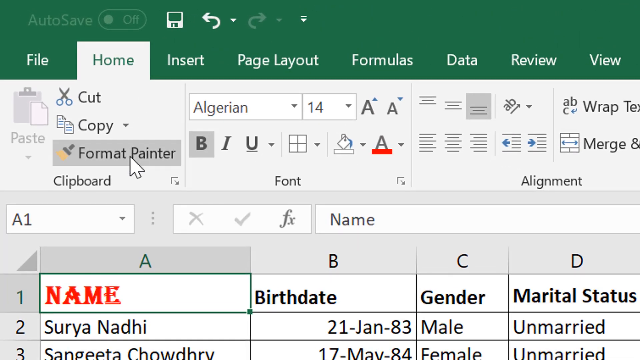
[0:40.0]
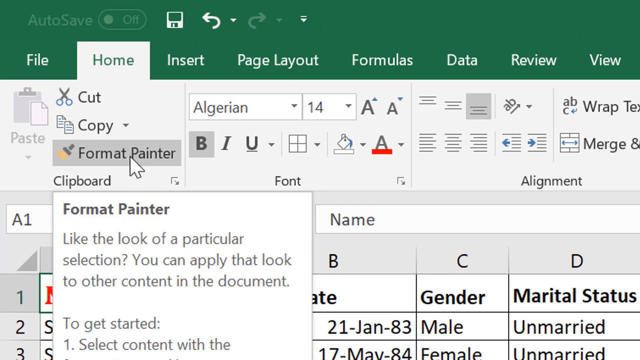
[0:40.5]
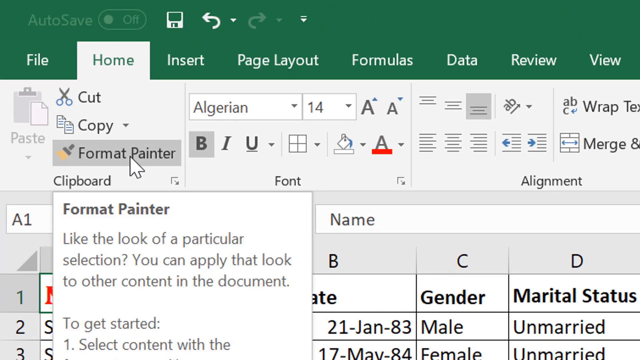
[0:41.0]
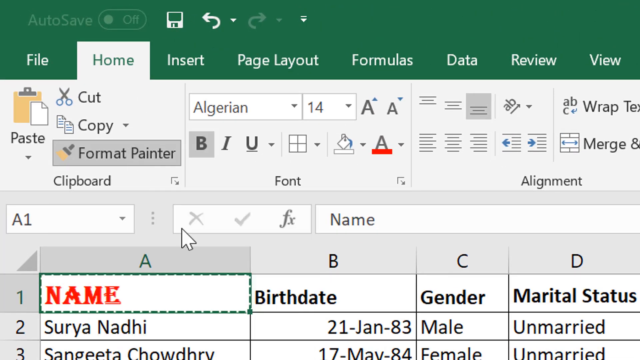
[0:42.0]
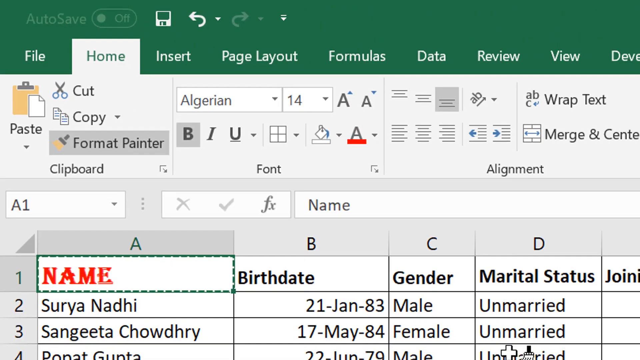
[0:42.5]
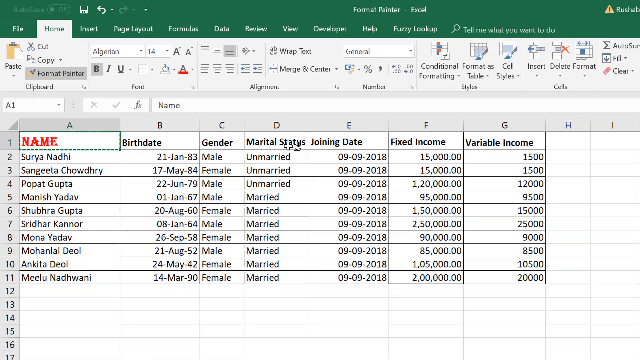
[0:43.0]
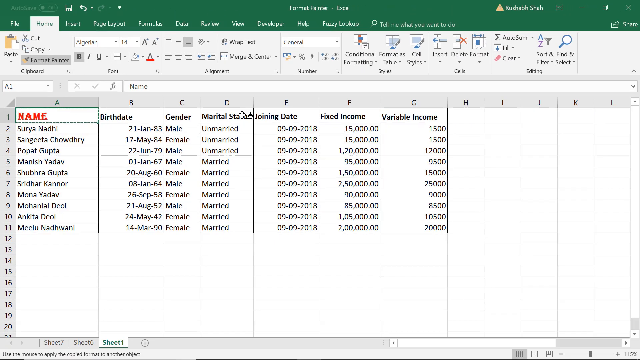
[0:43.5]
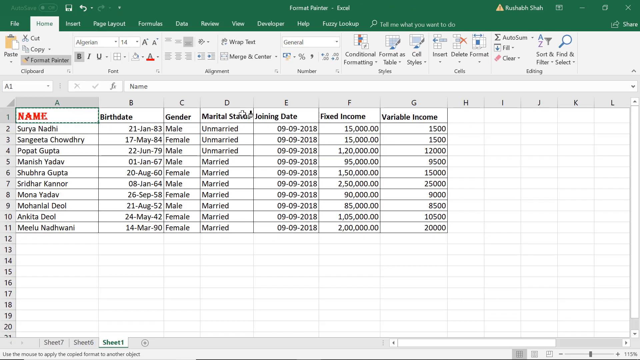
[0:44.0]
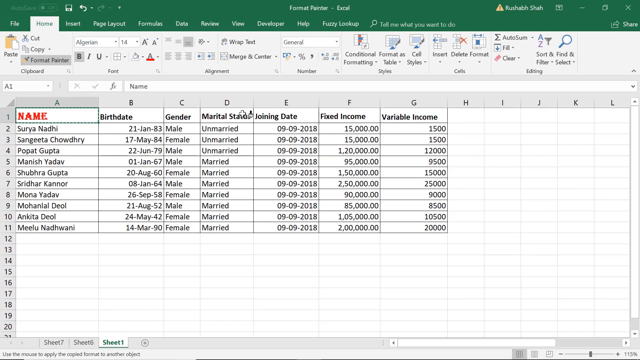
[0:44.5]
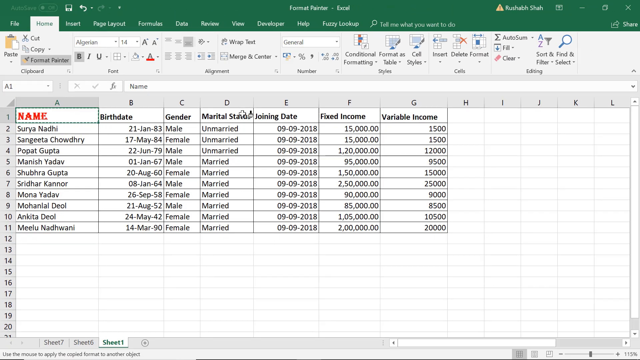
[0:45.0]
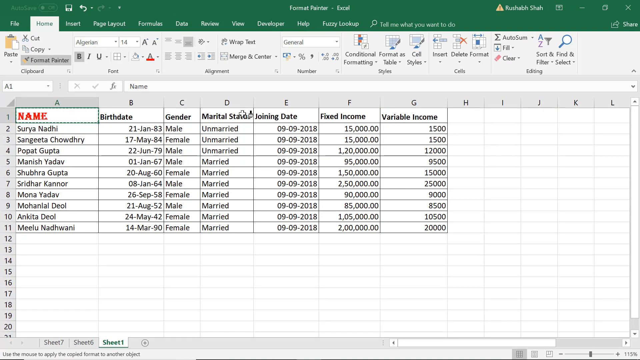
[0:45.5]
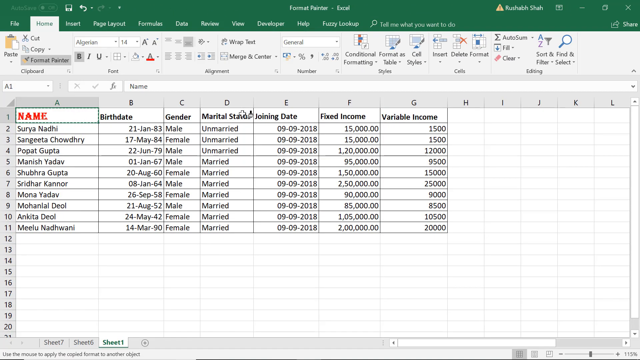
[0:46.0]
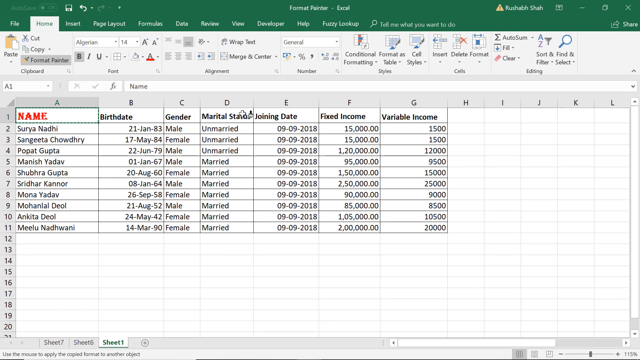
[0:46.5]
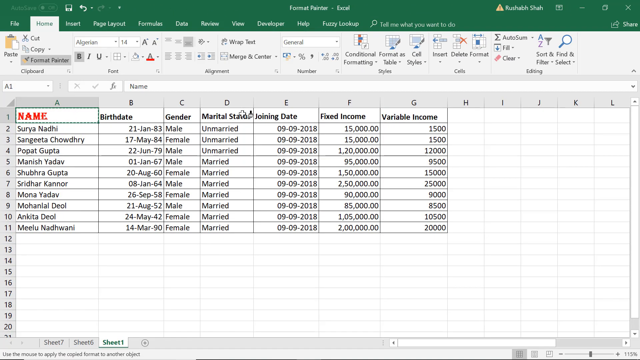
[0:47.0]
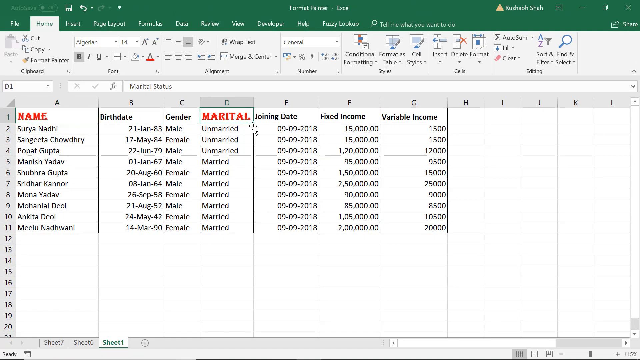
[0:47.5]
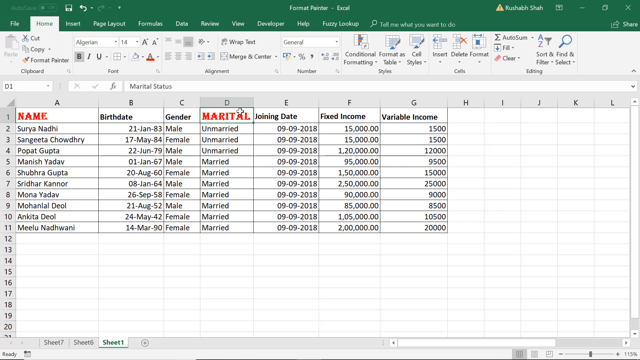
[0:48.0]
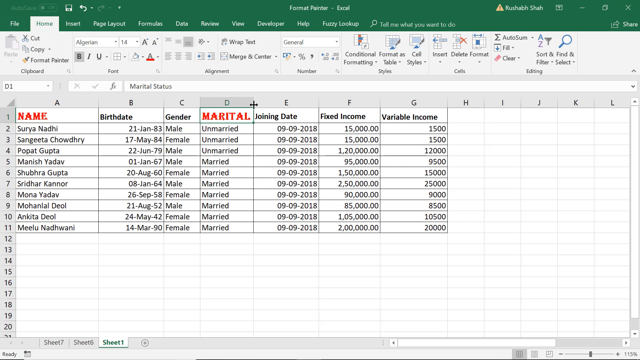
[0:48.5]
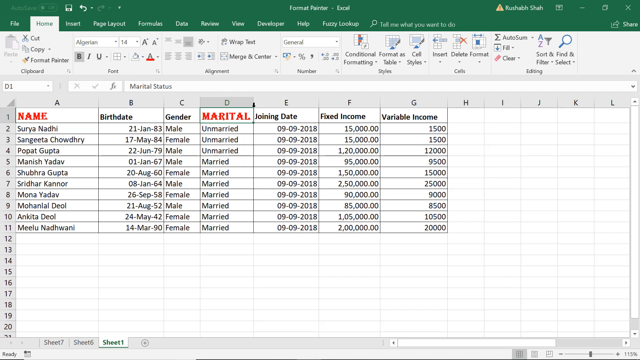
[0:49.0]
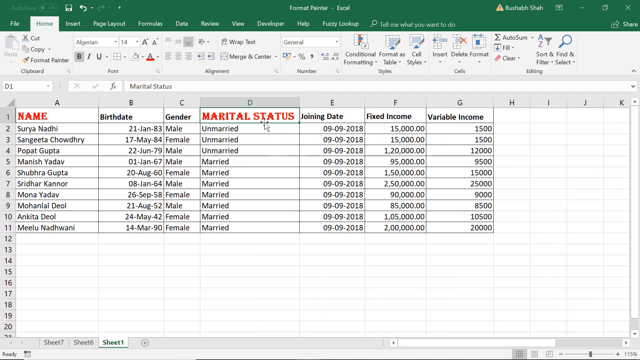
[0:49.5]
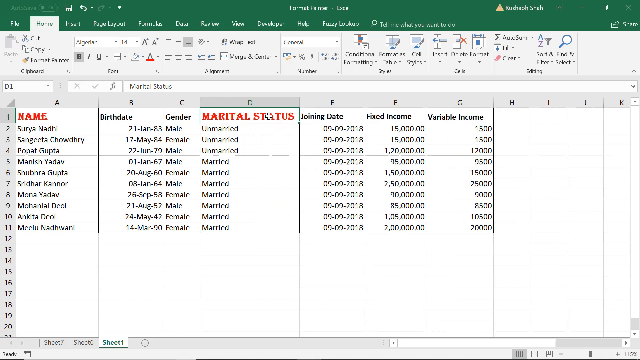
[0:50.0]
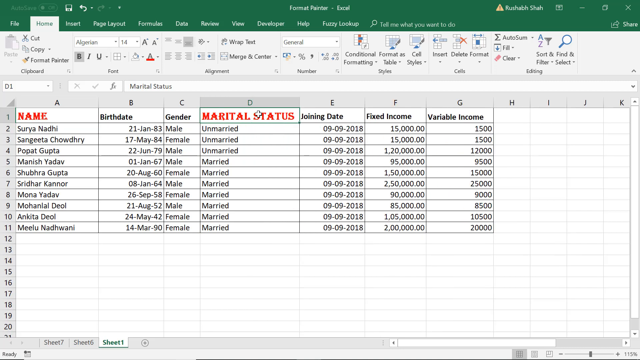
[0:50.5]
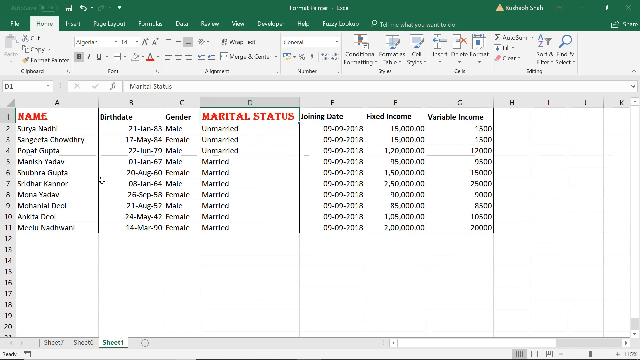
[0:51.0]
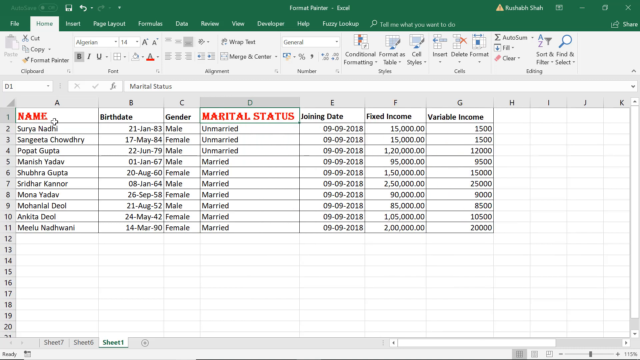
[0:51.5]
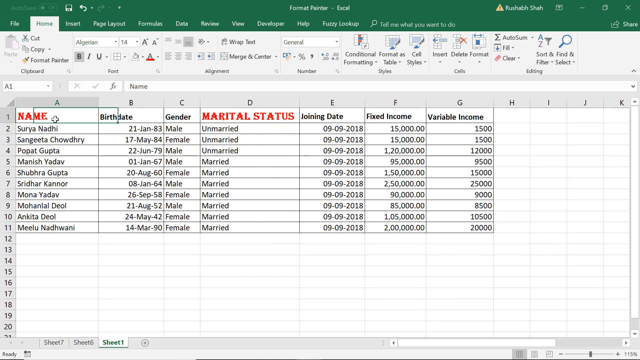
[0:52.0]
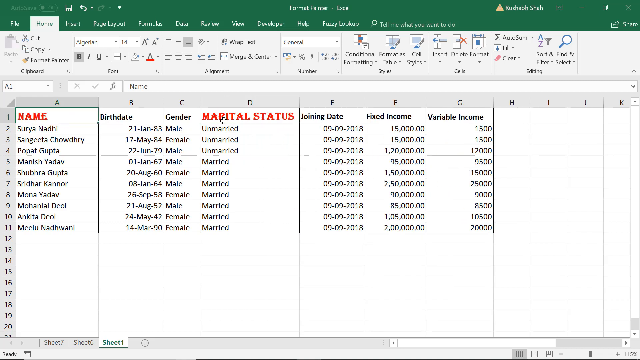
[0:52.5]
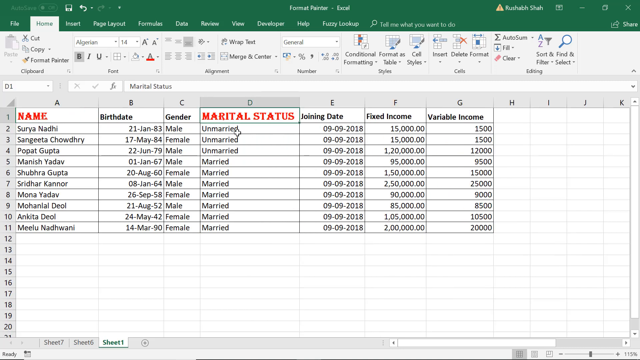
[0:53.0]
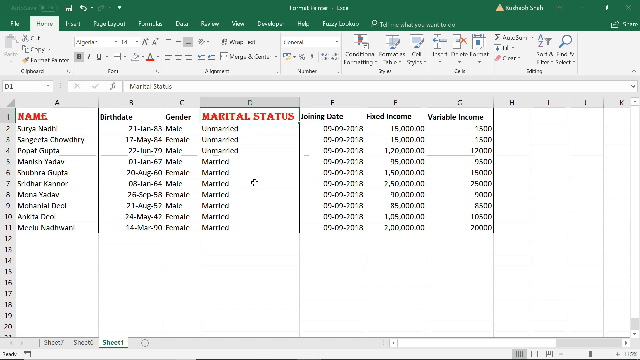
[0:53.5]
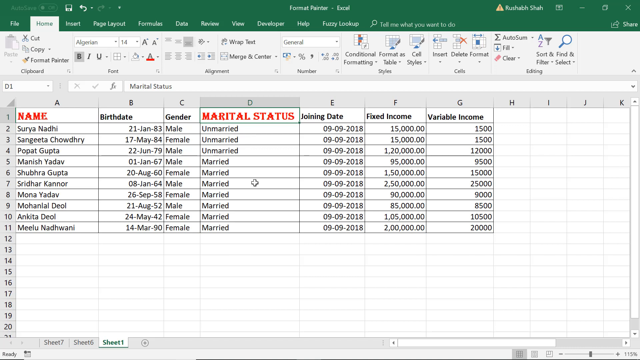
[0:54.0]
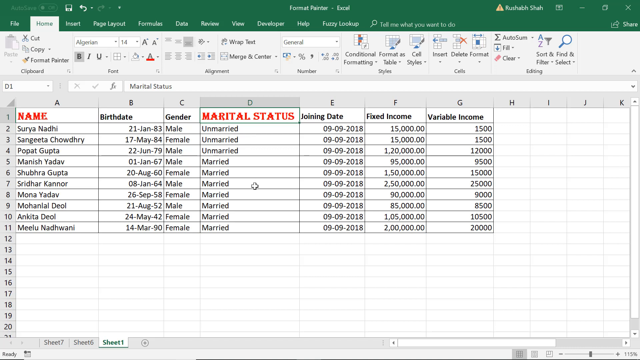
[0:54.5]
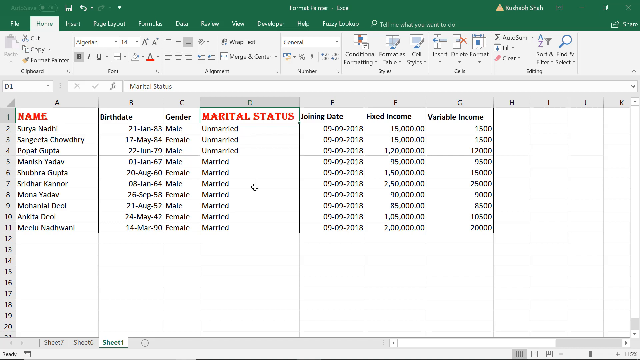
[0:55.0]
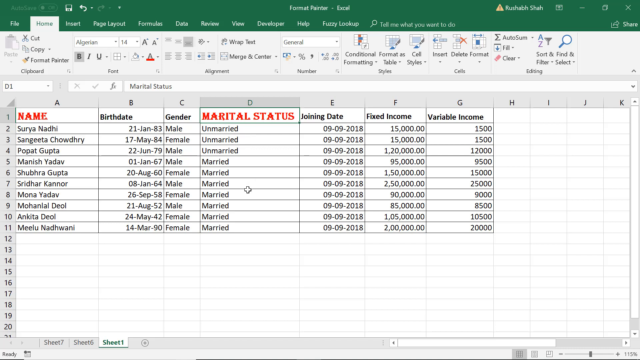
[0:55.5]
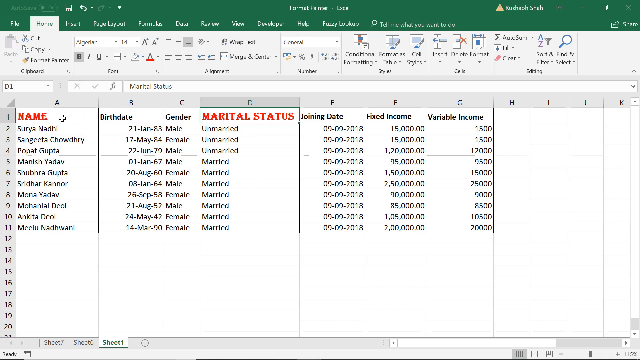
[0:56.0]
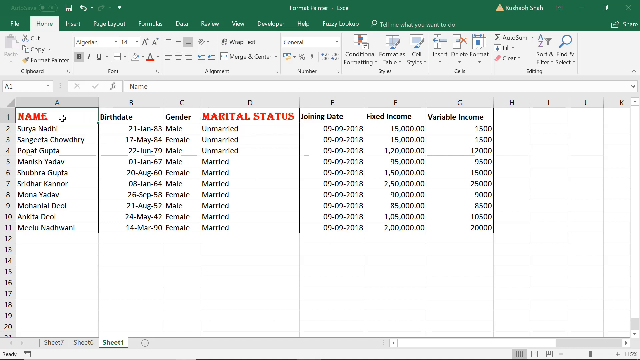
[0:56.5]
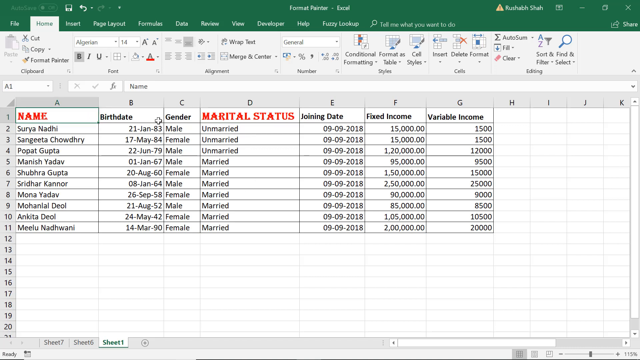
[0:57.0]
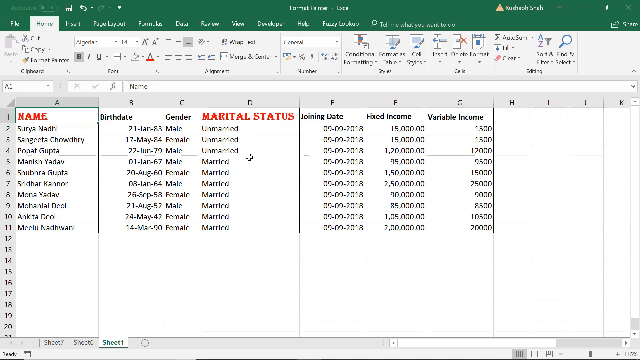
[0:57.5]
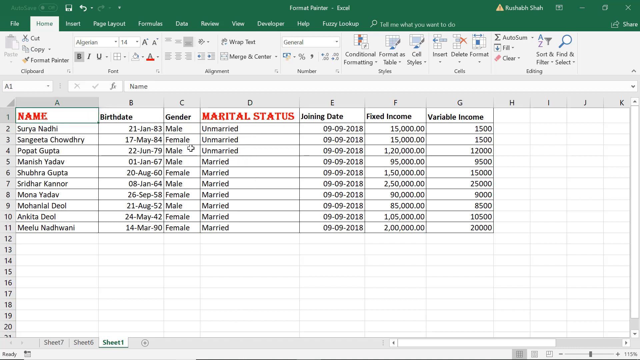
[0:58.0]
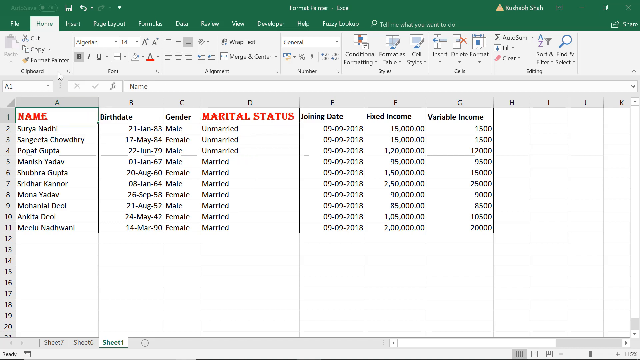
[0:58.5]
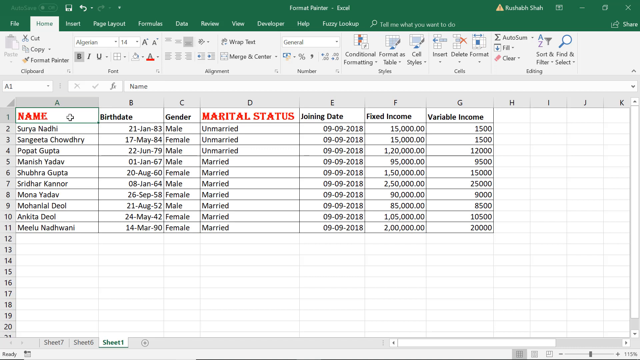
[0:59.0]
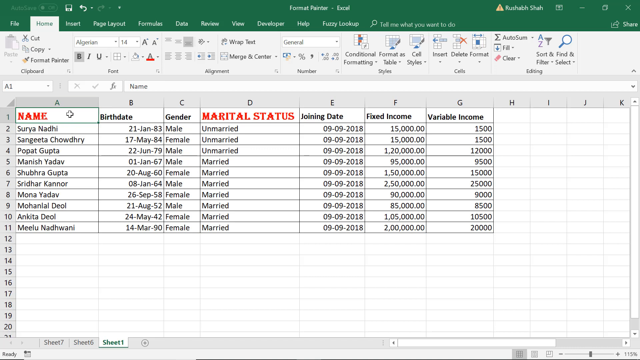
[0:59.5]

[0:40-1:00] The user uses Format Painter to change aspects of the spreadsheet. Hovering over Format Painter shows a description that reads "Format Painter, like the look of a particular selection. You can apply that look to other content in the document." The view zooms out to show the entire spreadsheet. The same font and color used on the name header, Algerian at size 14 in red, are applied to the marital status header in column D, so column A, name, and column D, marital status, are both in red.